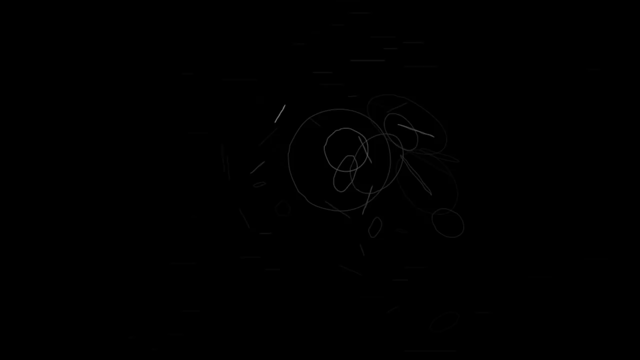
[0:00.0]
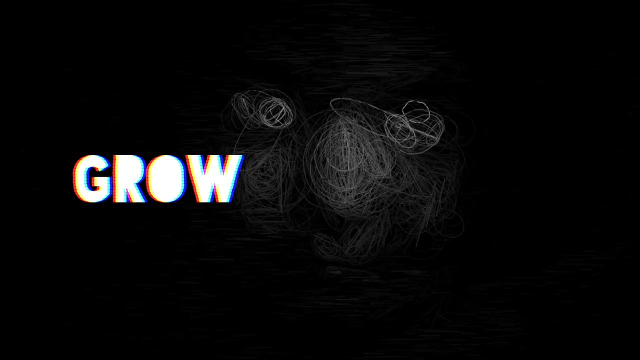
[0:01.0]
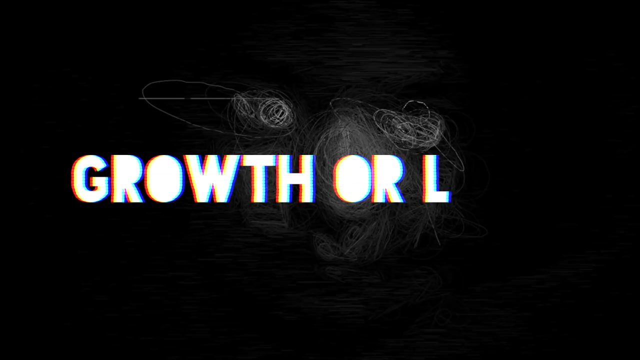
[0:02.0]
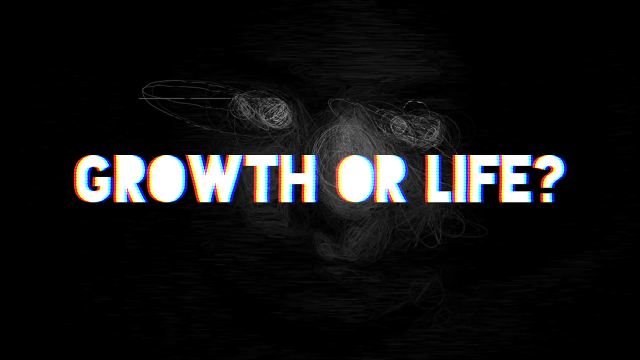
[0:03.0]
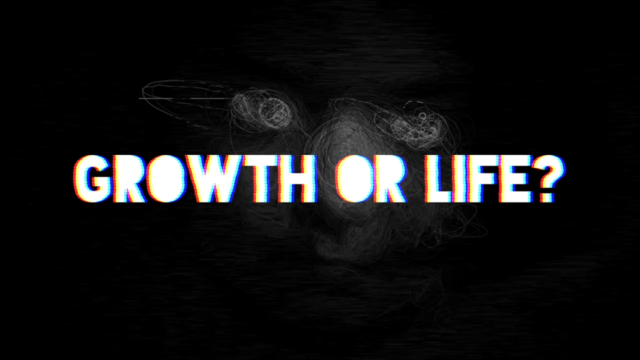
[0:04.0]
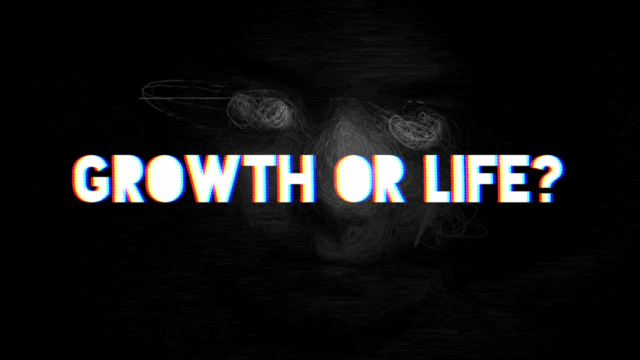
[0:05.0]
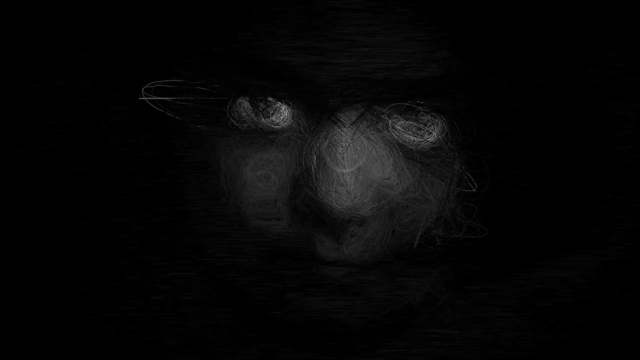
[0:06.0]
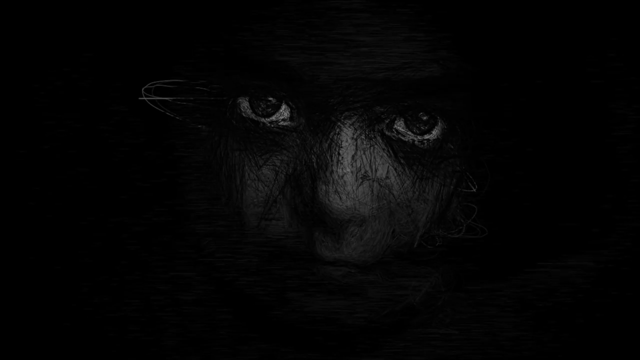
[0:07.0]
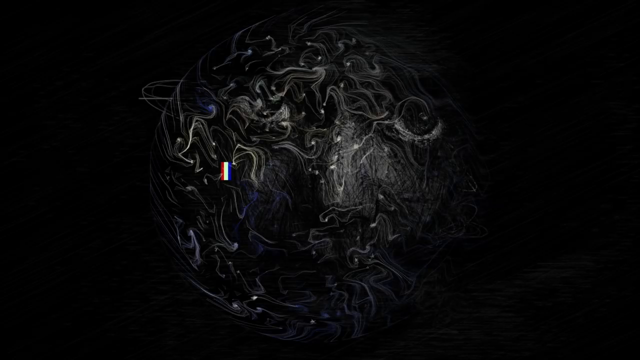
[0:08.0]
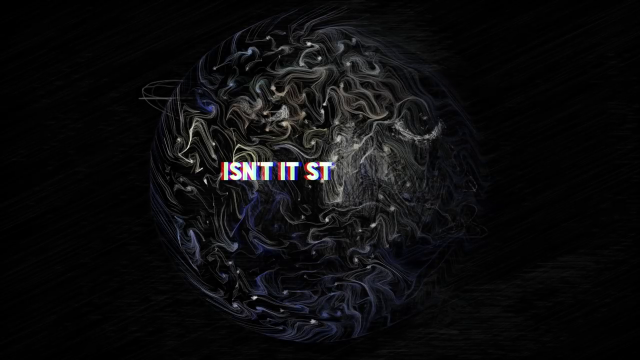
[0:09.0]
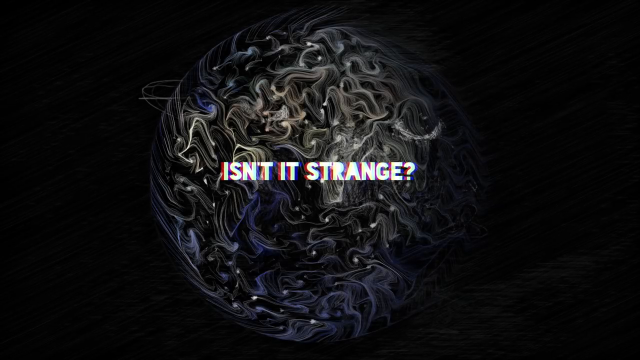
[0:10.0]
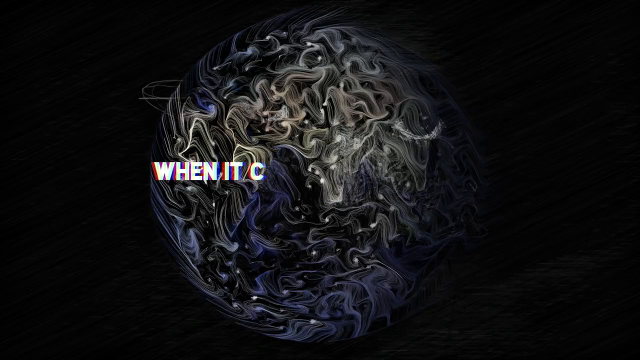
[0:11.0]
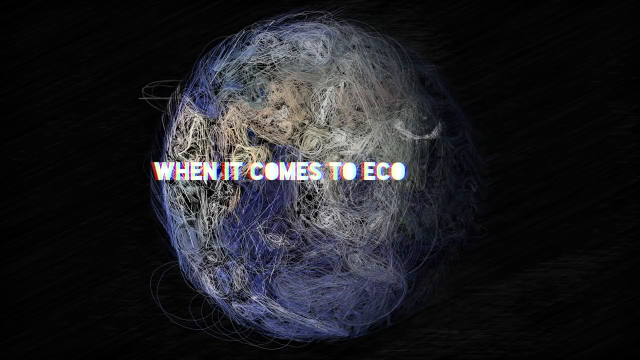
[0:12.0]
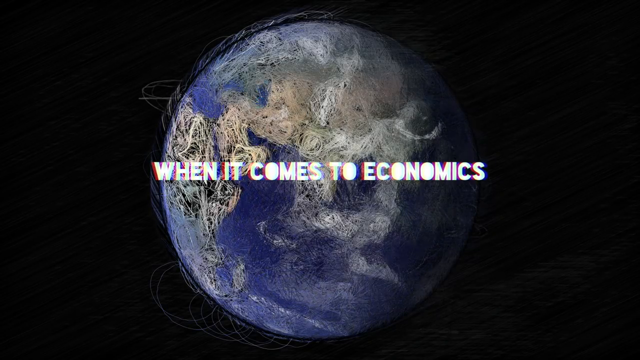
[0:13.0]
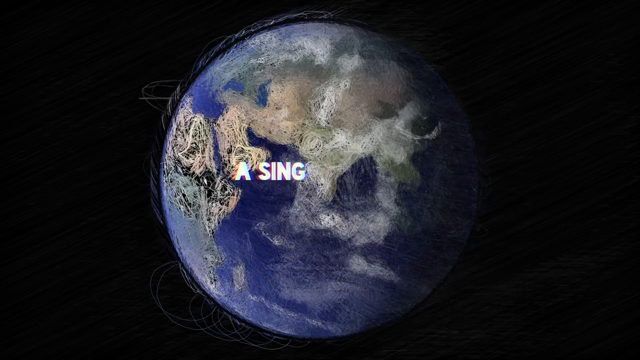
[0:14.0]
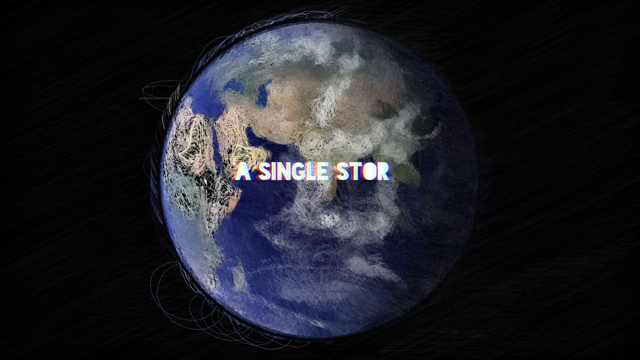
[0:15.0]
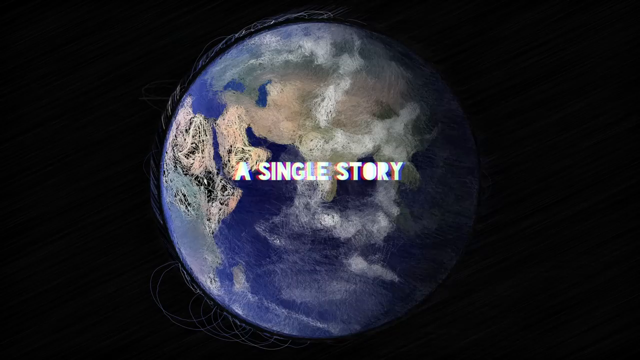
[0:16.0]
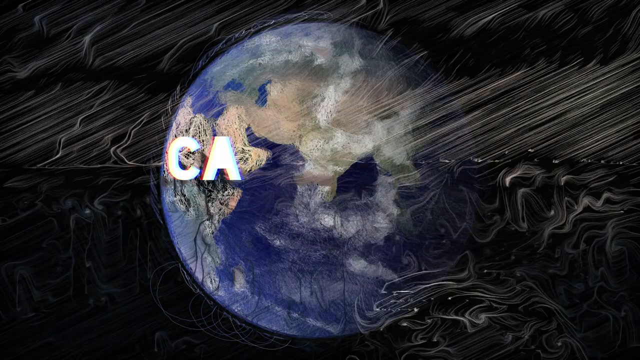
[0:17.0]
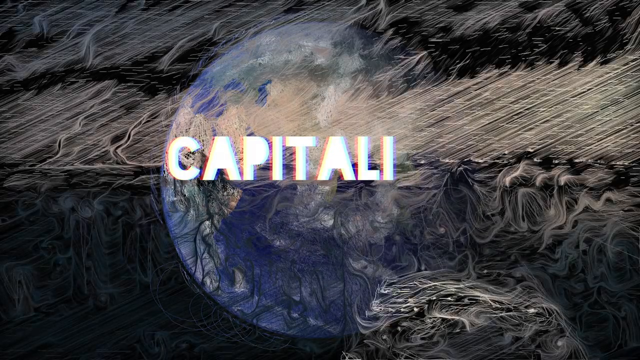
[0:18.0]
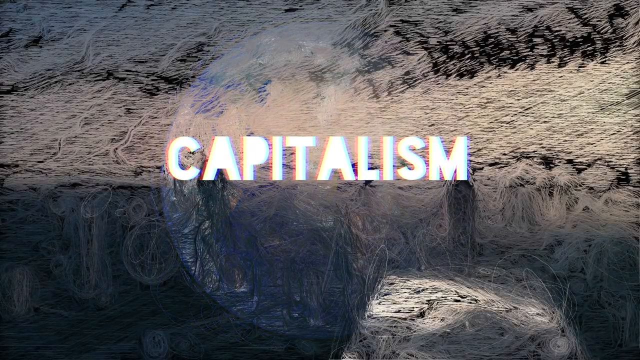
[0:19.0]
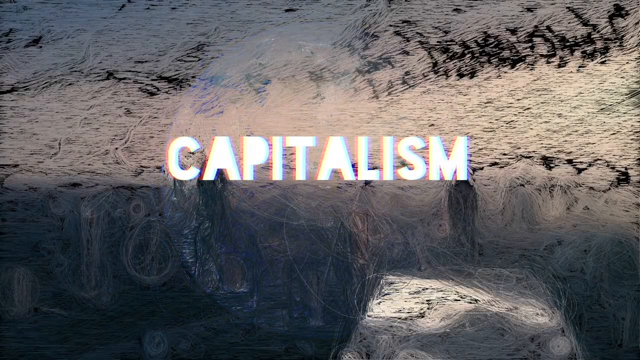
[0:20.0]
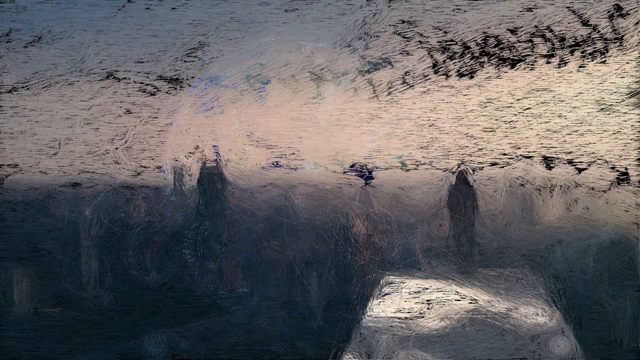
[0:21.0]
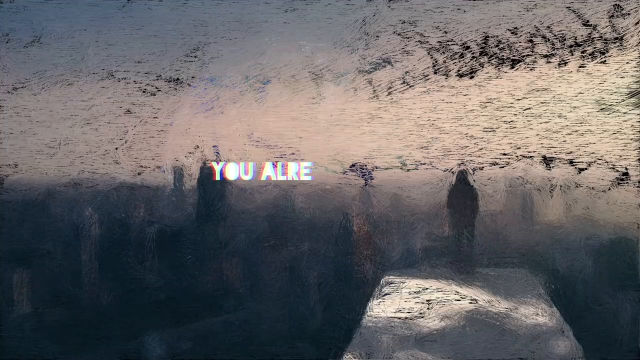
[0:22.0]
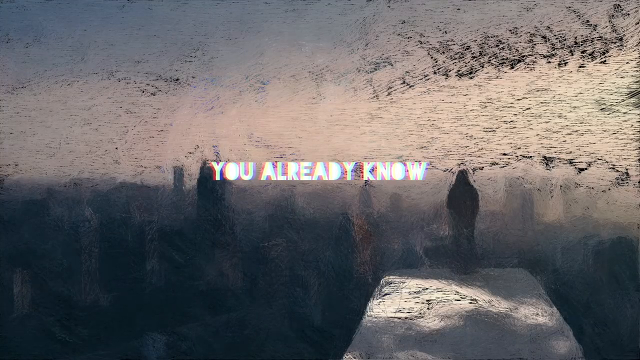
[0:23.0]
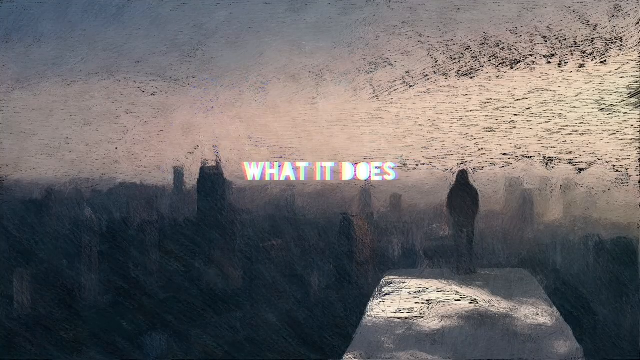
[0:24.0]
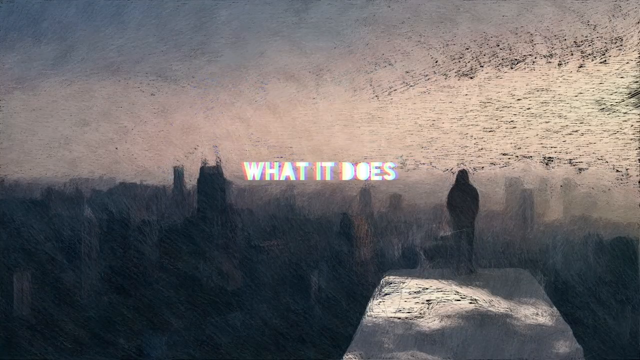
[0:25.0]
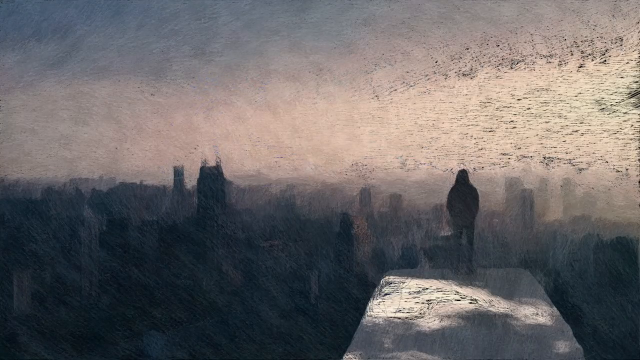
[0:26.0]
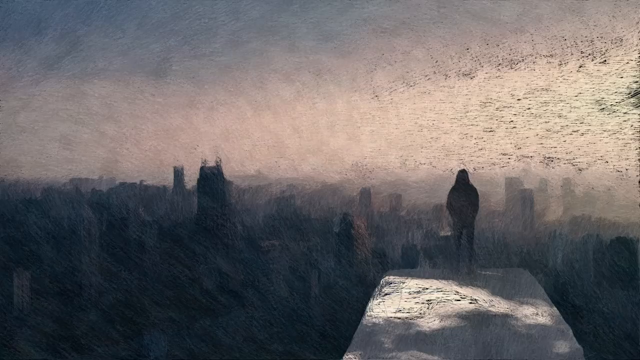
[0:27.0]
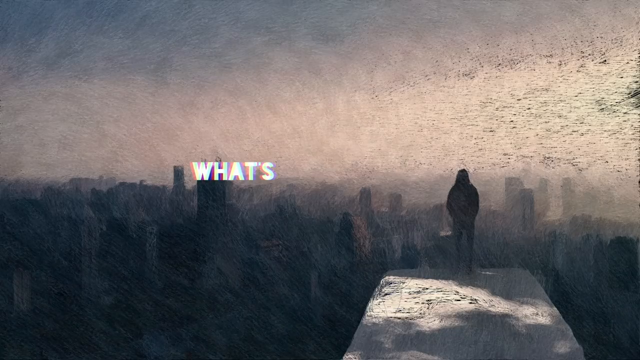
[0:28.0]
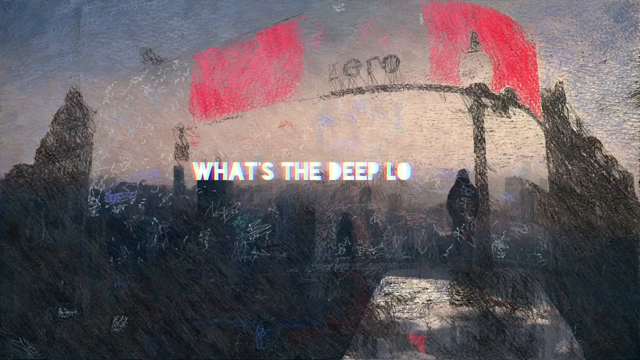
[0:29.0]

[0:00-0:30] The video concerns capitalism. The face of a young black kid appears, and on-screen text reads "isn't it strange when it comes to economics", followed by the word "capitalism" over a world map. Text then reads "you already know what it does".